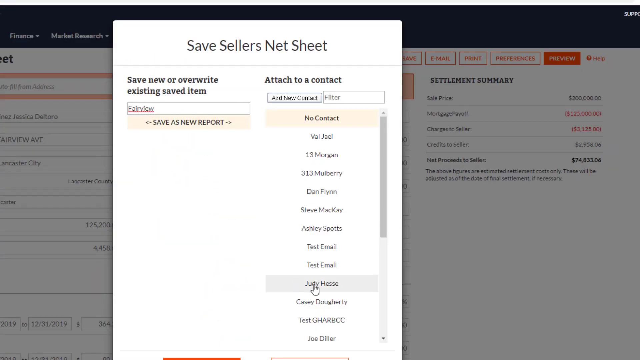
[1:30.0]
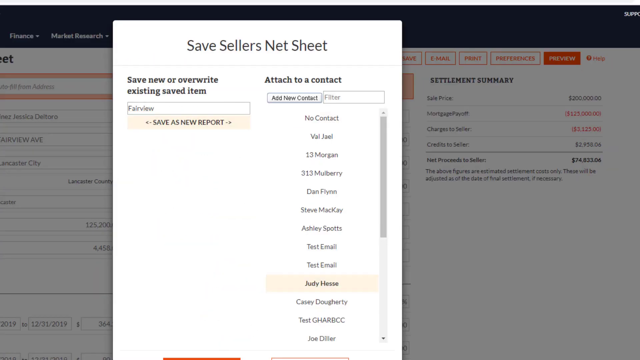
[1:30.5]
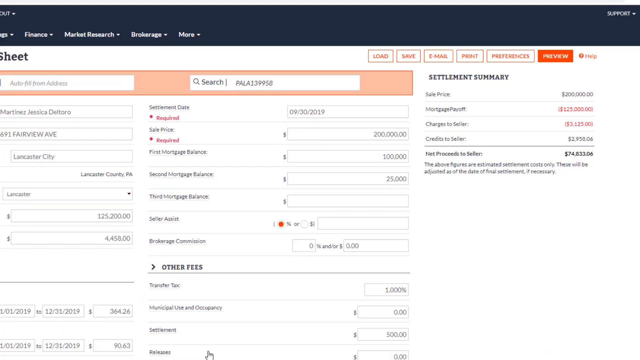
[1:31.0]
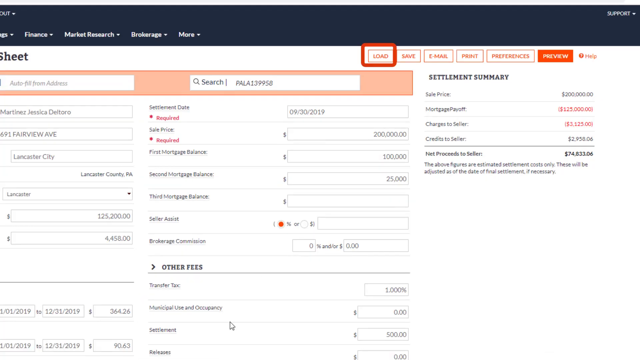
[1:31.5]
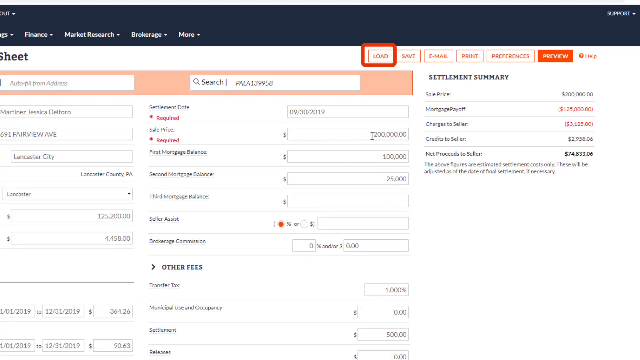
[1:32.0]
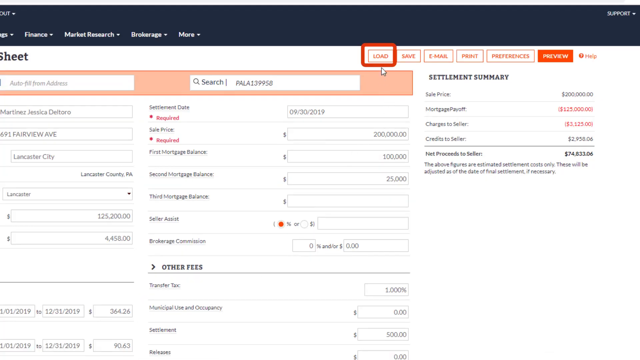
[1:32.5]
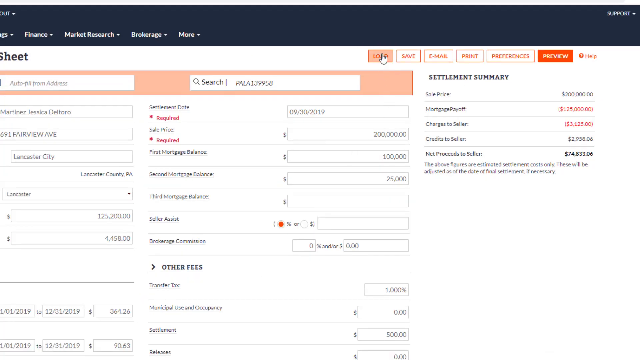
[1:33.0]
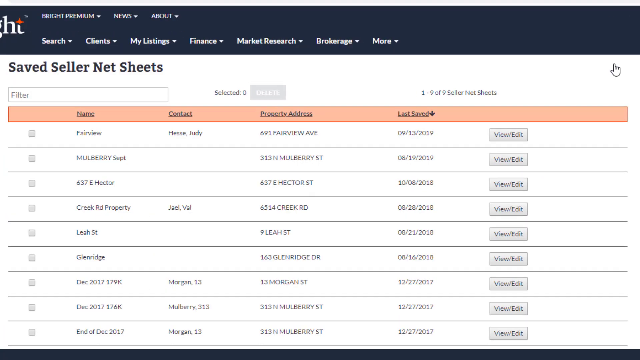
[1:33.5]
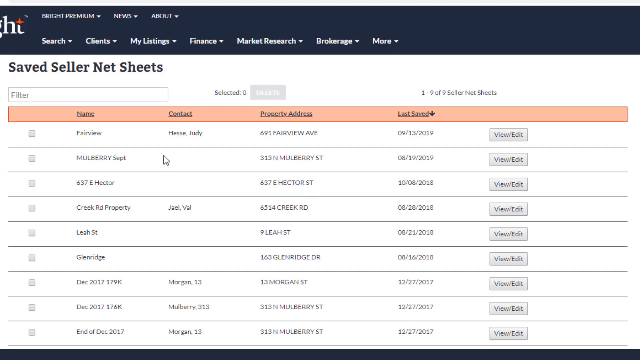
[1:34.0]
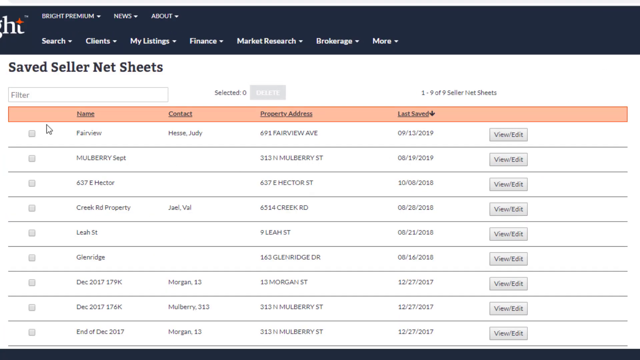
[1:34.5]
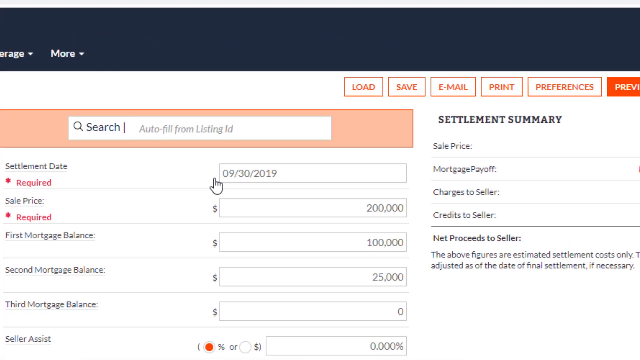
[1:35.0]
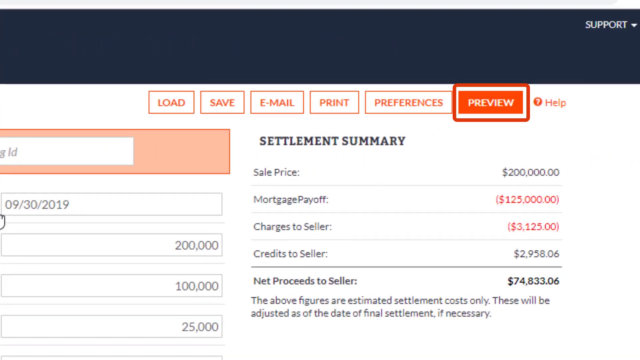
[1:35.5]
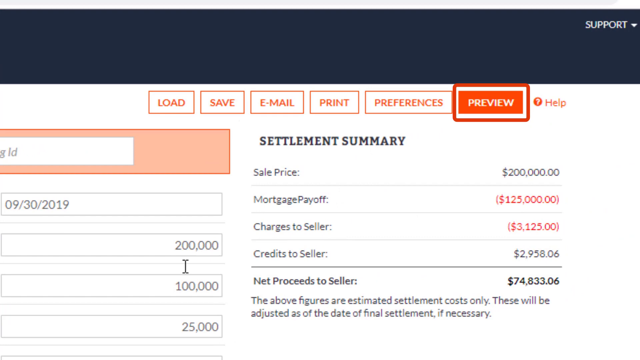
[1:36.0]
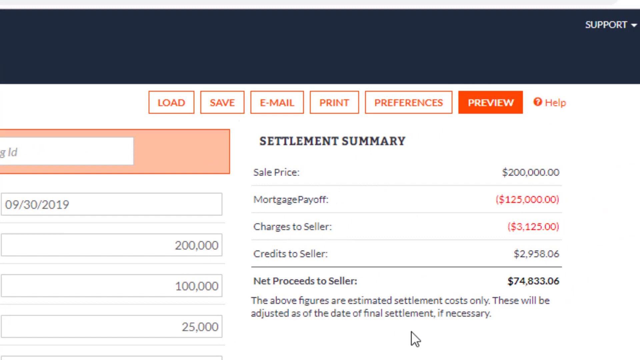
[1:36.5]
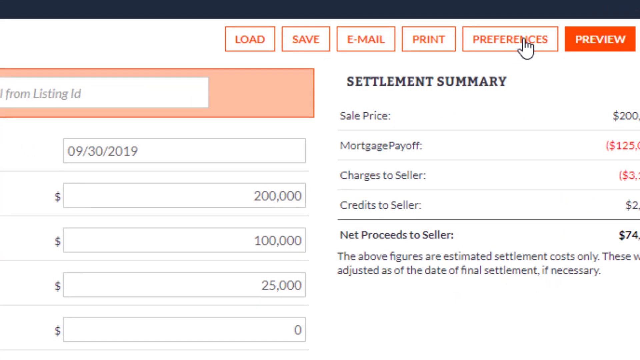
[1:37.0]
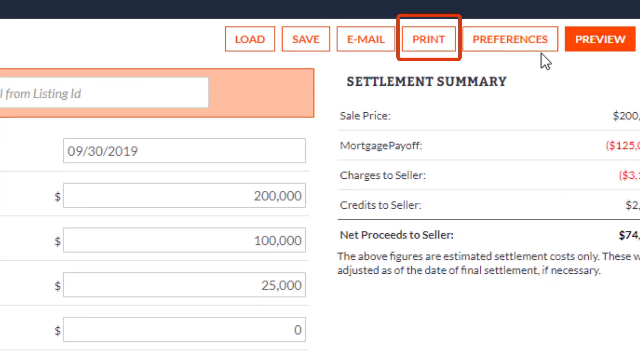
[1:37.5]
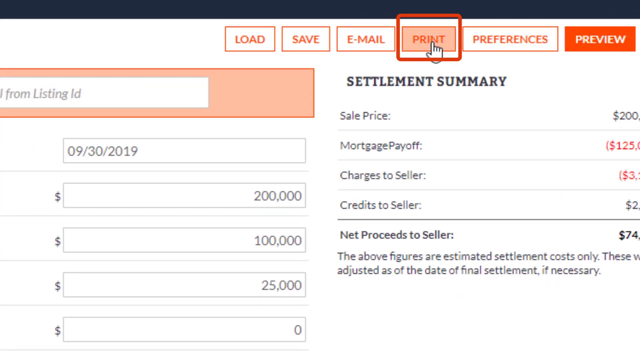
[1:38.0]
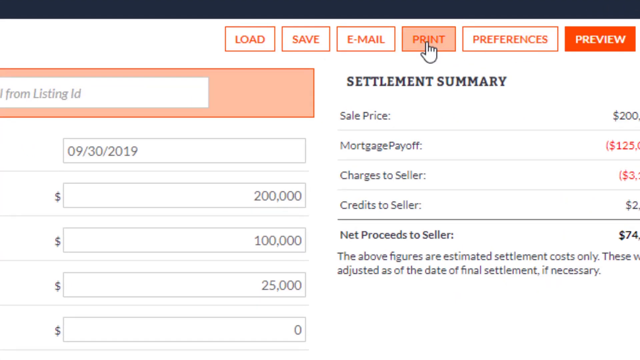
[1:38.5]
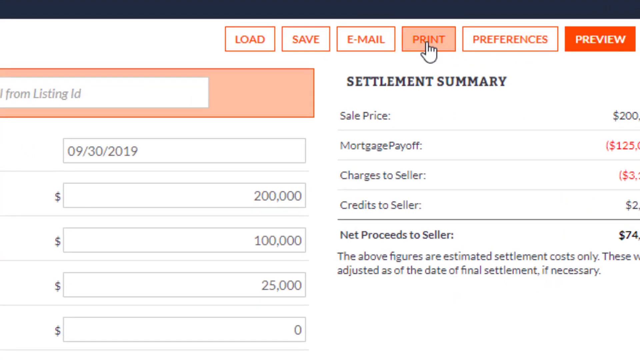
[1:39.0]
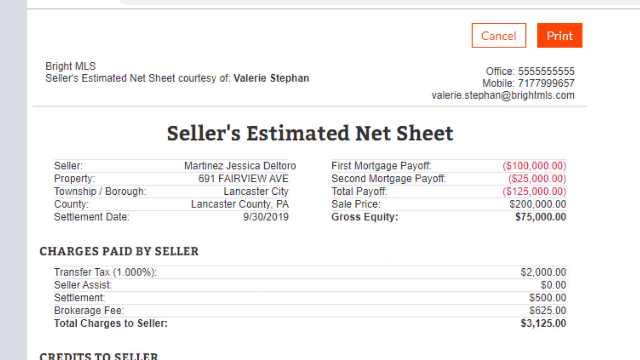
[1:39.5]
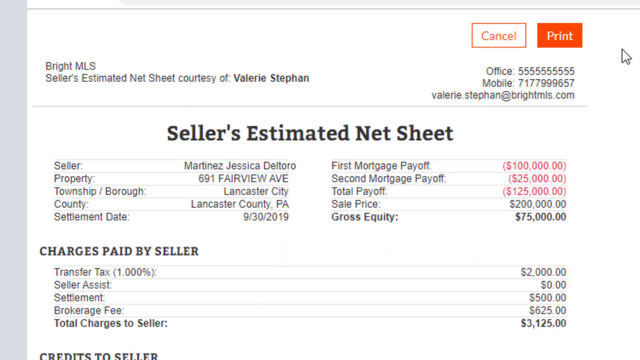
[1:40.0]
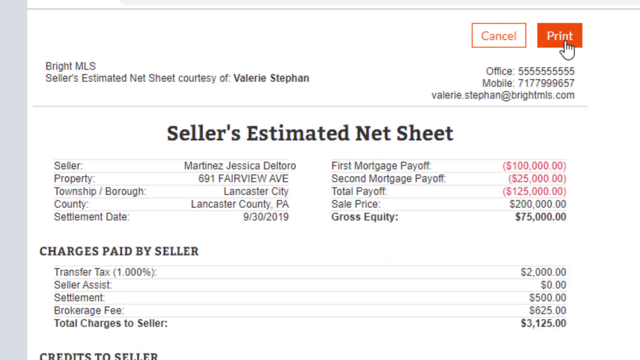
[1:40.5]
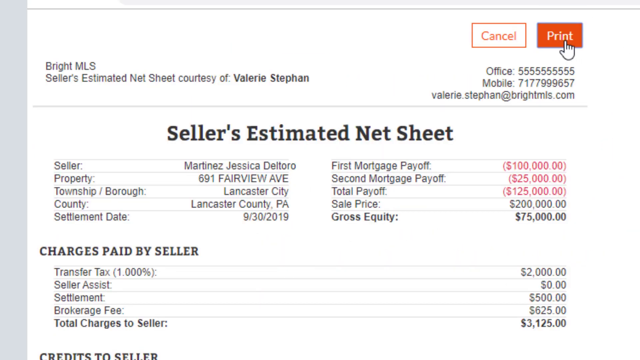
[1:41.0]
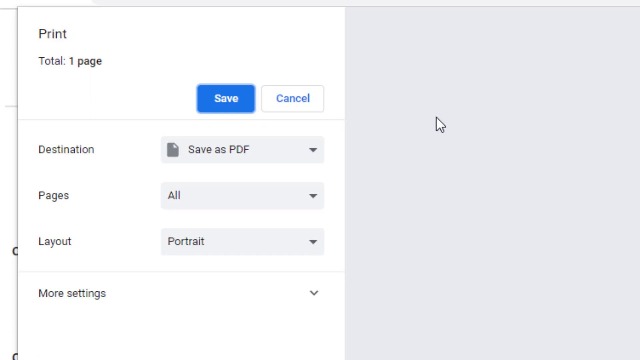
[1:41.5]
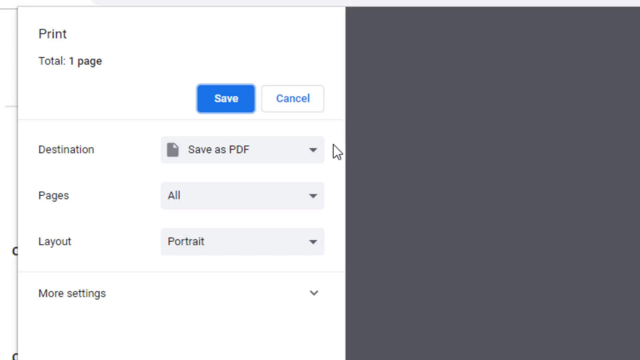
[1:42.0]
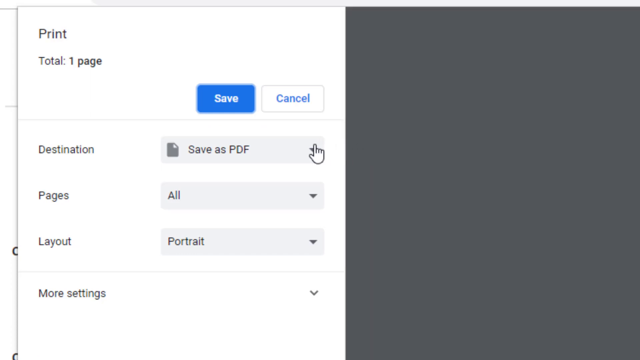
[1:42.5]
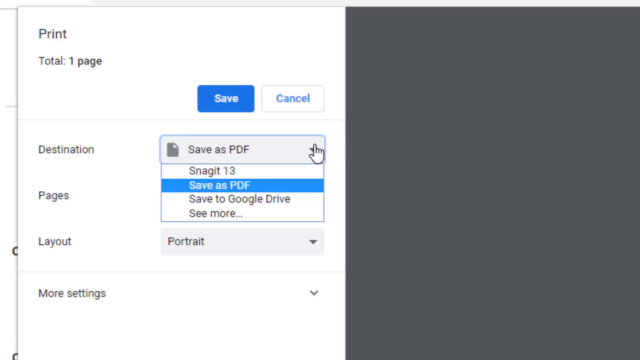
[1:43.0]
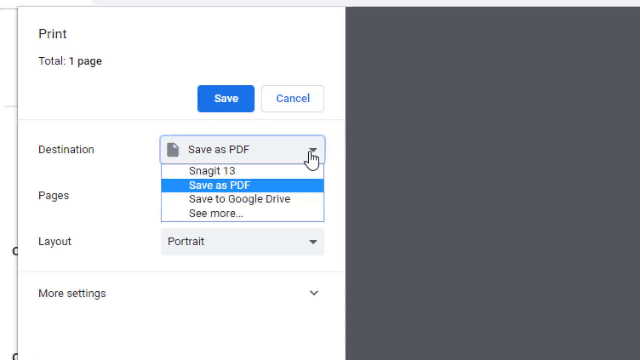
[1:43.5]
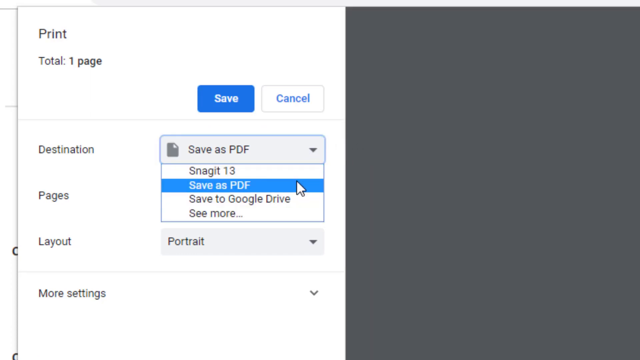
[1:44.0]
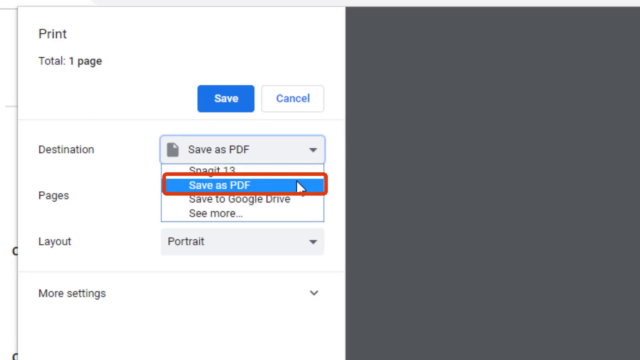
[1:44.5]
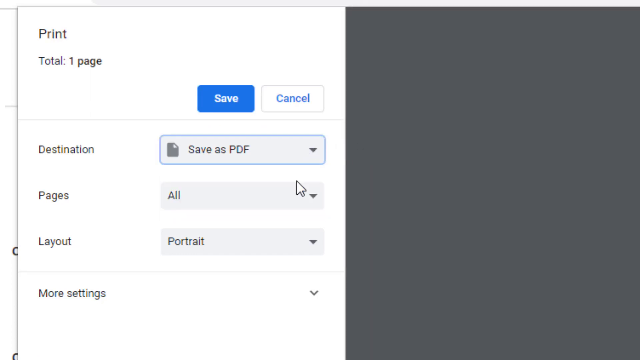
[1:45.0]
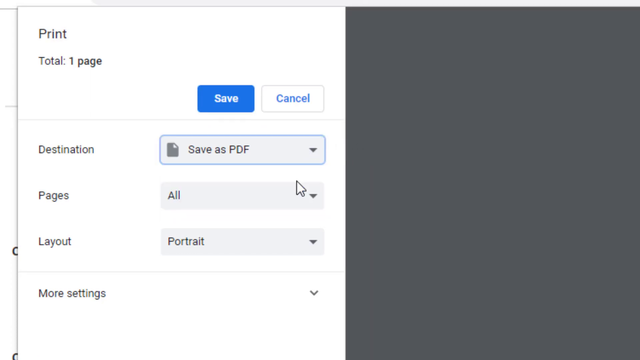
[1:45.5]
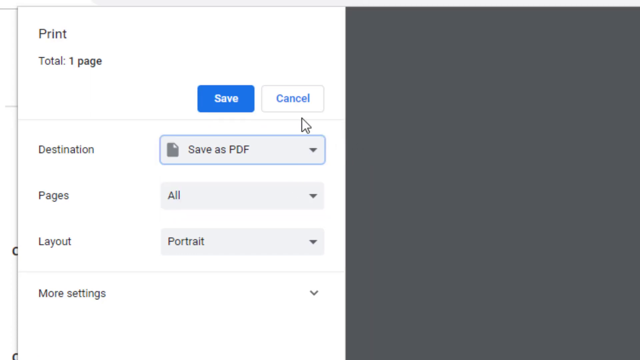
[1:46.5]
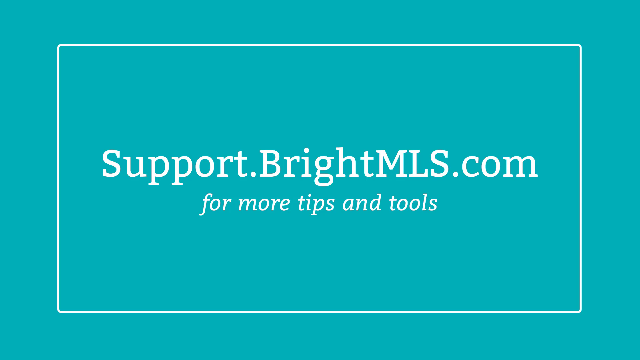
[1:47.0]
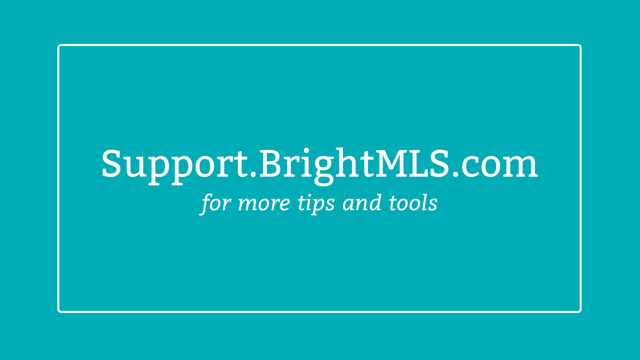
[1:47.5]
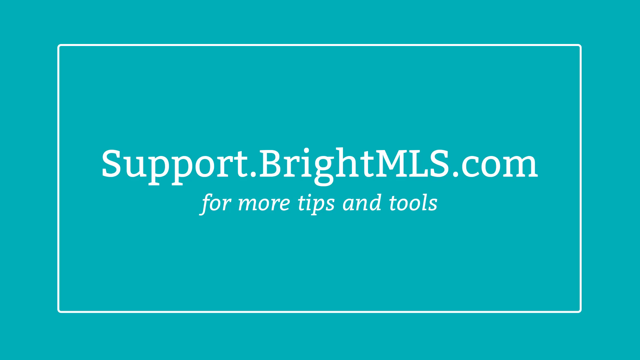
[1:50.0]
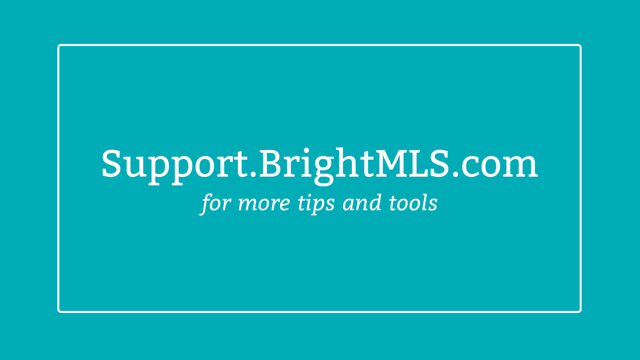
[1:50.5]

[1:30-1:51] A pop-up window says "Save Sellers Netsheet." There are two options, "Save New" or "Overwrite Existing Saved Item," underneath which it says "Save as New Report." A space to enter a title is filled in with the word "Fairview." On the right-hand side is an option that says "Attach to a Contact," a button that says "Add New Contact," and a contact list that starts with no contact and lists a large number of names and addresses below it. The user clicks through several more options, ultimately working to print the seller's estimated net sheet to PDF to save it, but his mouse movements are shown far too quickly and too poorly highlighted to follow in detail, and the view zooms in tightly on what he is doing, making it hard to see how he navigates the sheet overall. The printed version of the net sheet is never shown. The video ends on a blue screen with a white rectangle outline surrounding the centered words "support.brightmls.com" with "for more tips and tools" in italics underneath, which appears to be the logo for the makers of the advertisement.